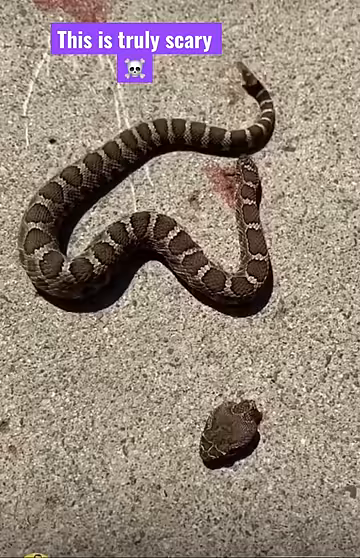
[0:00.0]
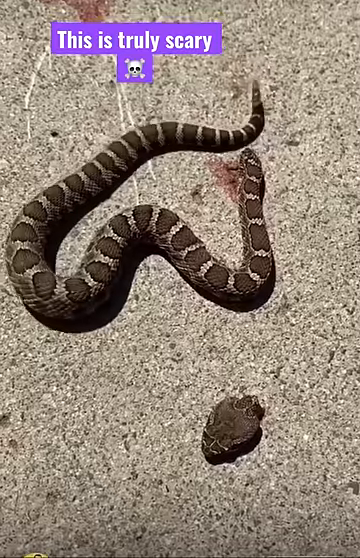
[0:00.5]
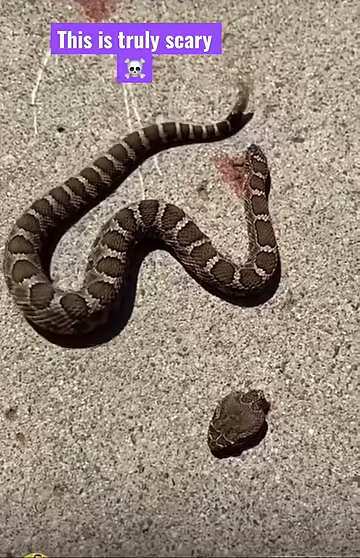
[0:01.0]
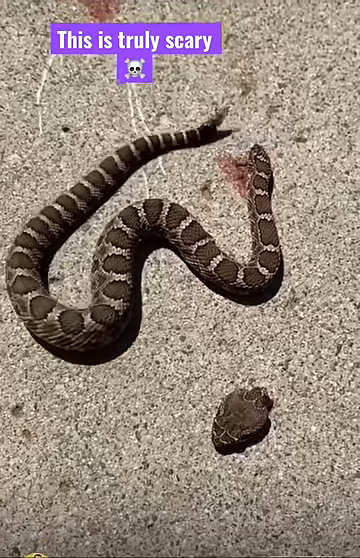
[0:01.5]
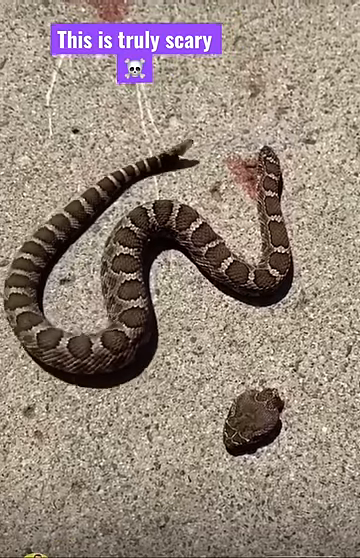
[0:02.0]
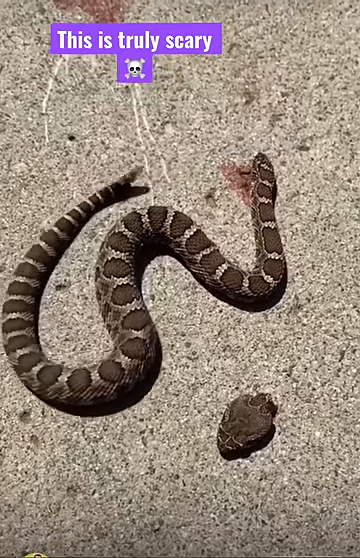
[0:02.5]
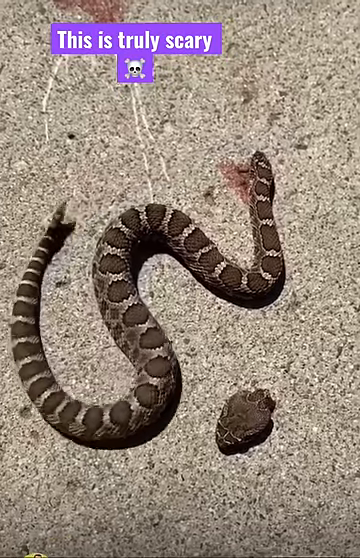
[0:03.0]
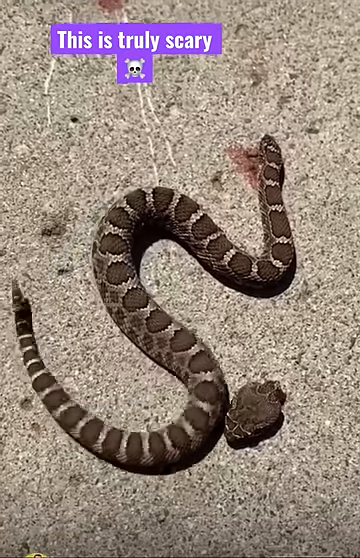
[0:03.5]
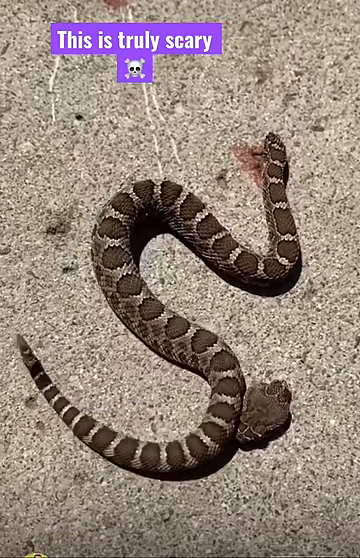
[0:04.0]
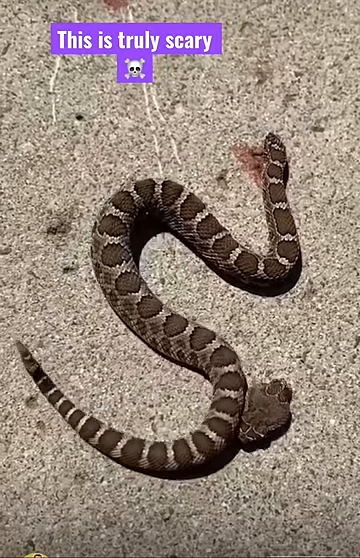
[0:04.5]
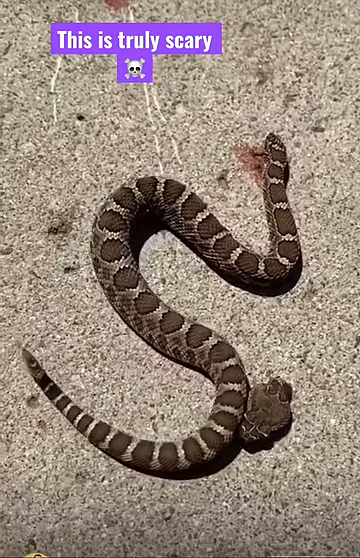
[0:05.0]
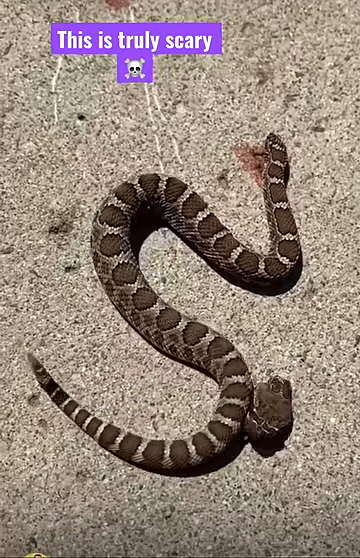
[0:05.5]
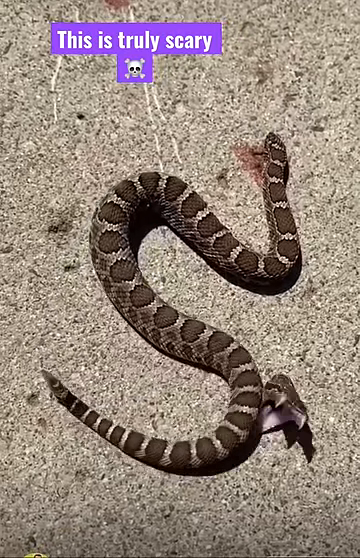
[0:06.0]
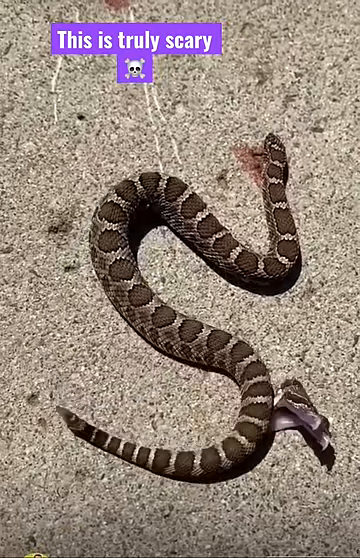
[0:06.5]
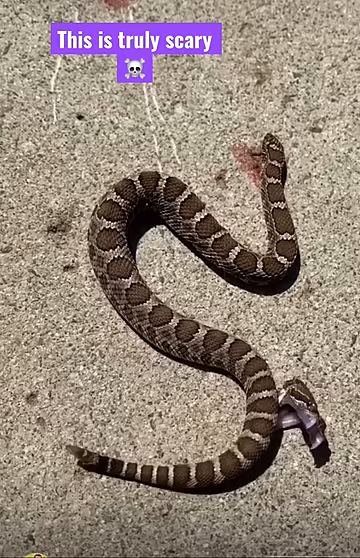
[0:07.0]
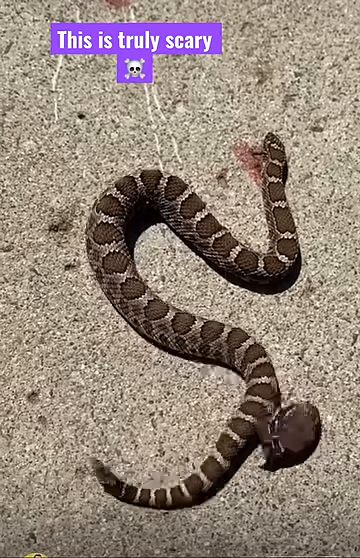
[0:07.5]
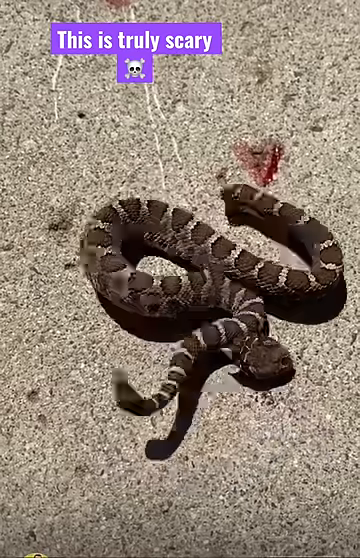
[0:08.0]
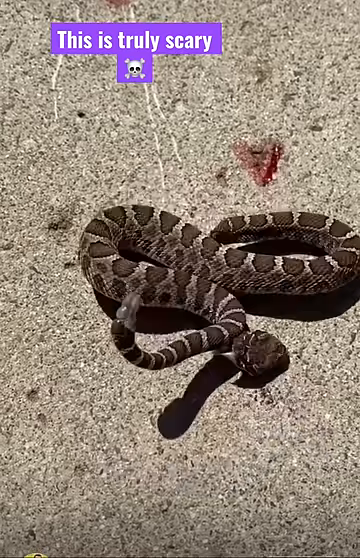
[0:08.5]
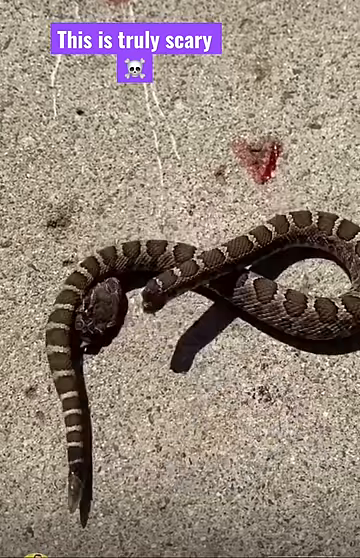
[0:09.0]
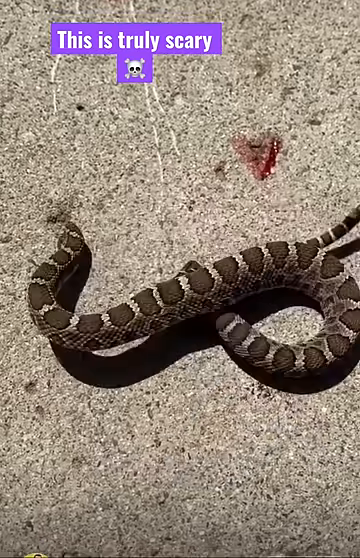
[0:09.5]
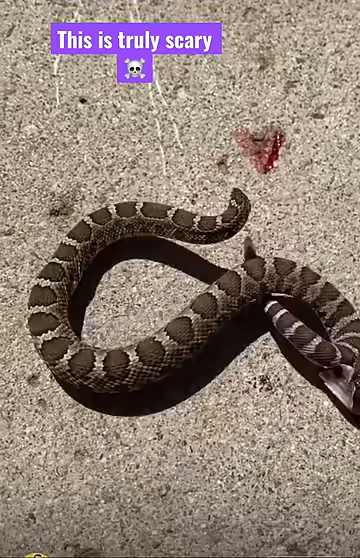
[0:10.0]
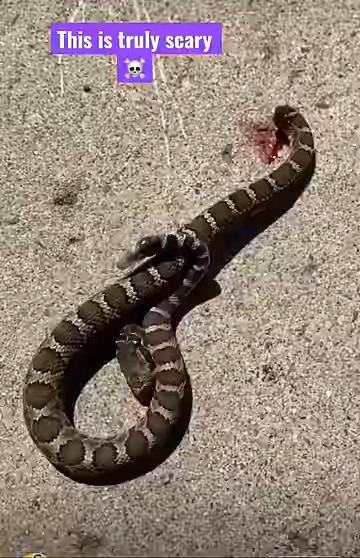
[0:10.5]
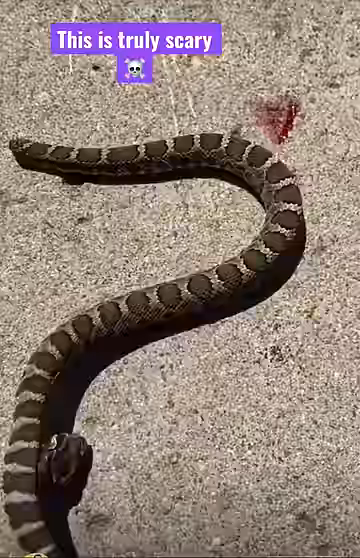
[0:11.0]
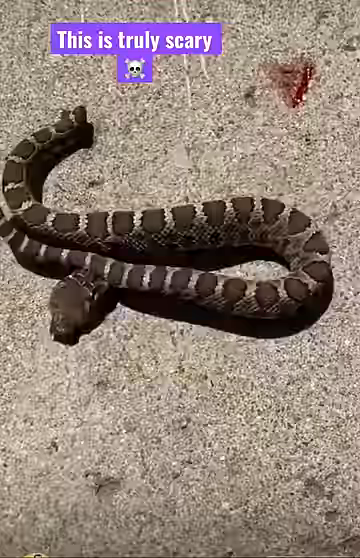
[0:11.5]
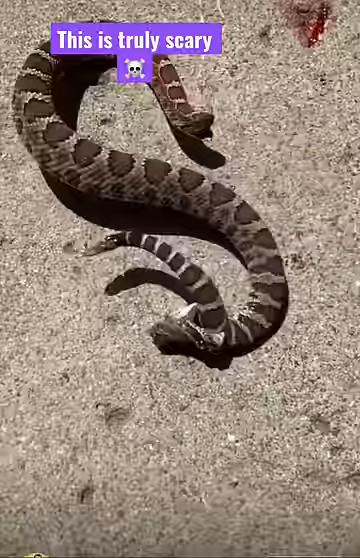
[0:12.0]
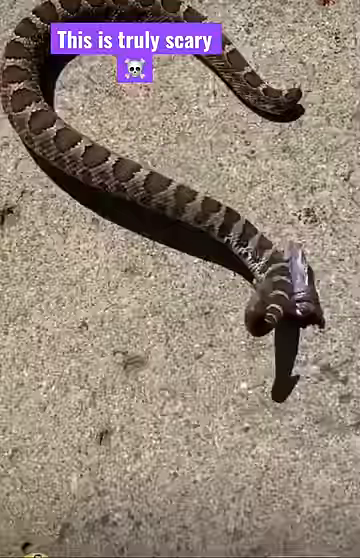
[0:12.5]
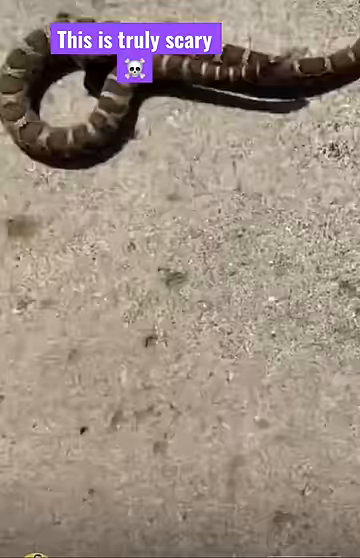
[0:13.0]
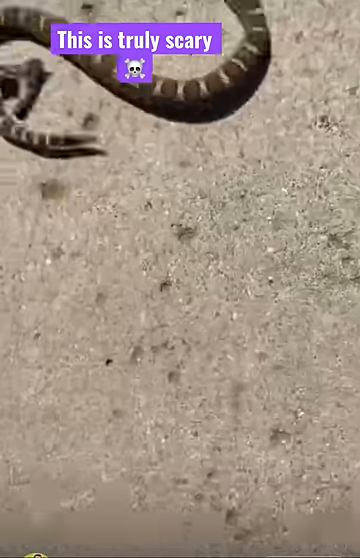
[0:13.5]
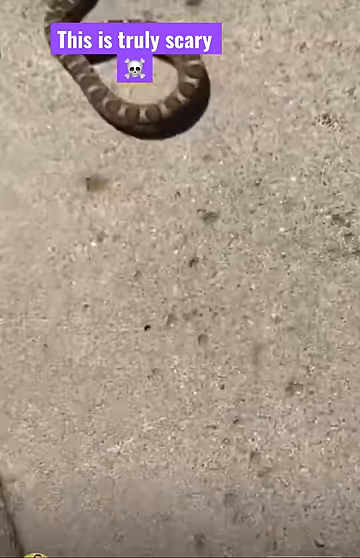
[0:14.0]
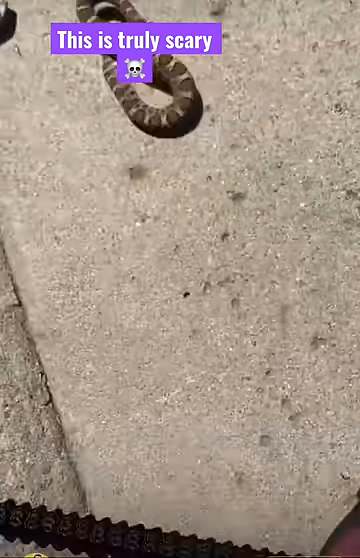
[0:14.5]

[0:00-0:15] On concrete, a rattlesnake tries to bite what looks like a frog, though it also looks like it could be a crab, and the snake ends up biting itself. There is a little bit of blood. The snake almost looks like it has two heads.